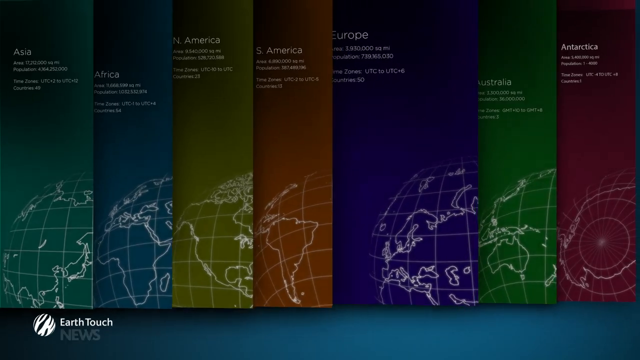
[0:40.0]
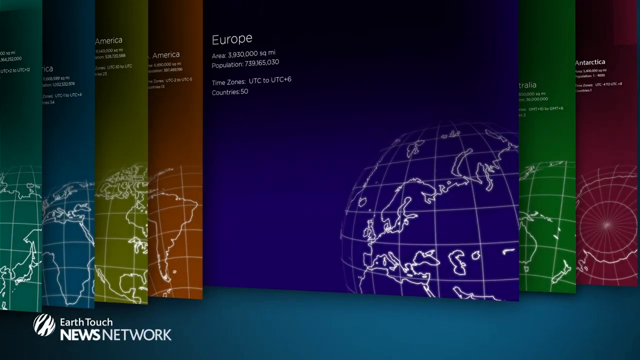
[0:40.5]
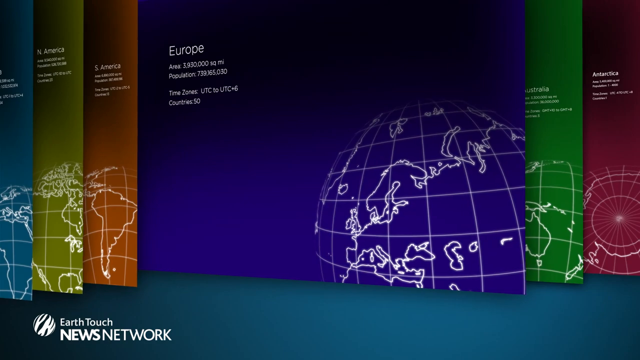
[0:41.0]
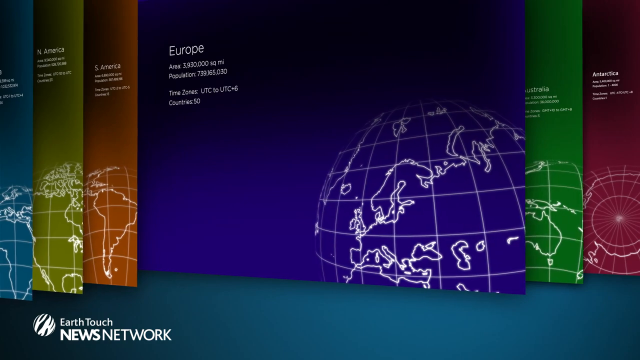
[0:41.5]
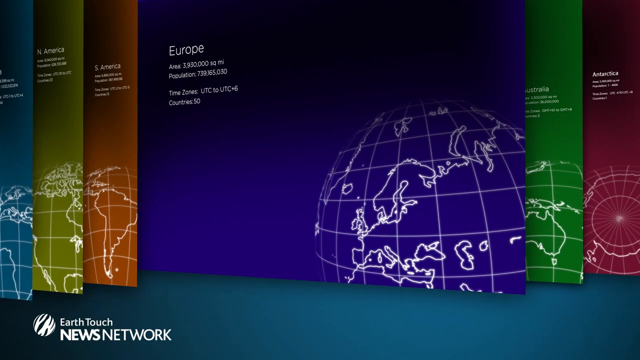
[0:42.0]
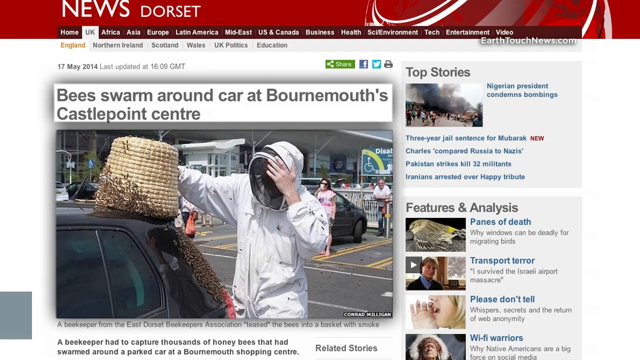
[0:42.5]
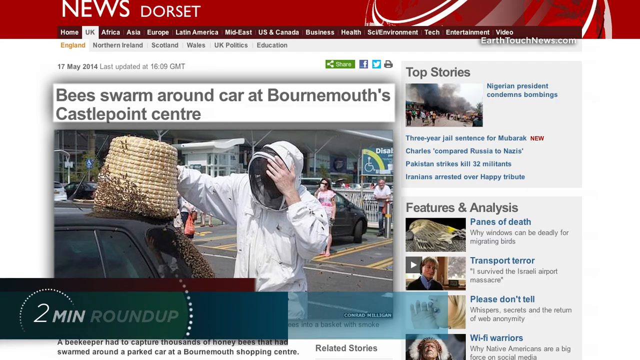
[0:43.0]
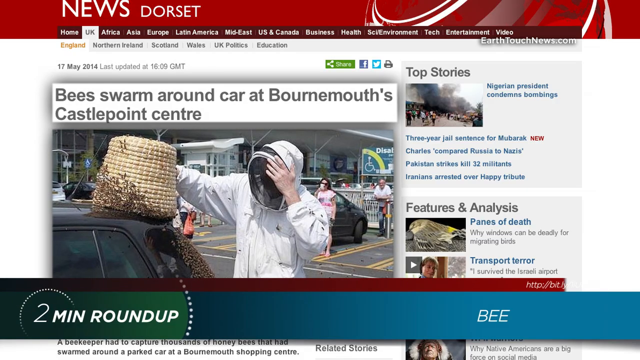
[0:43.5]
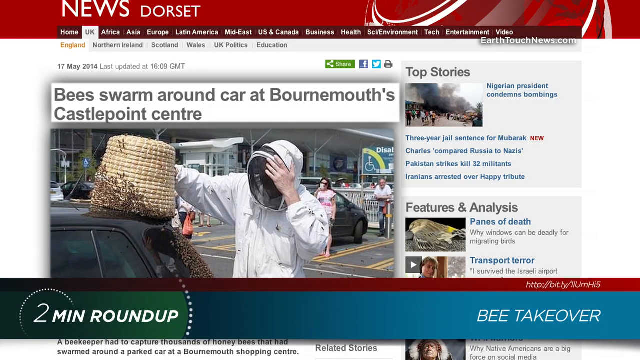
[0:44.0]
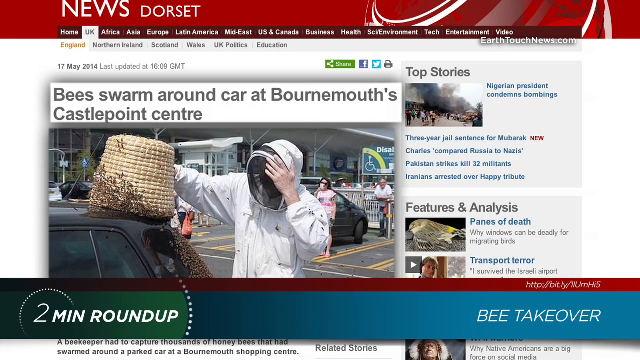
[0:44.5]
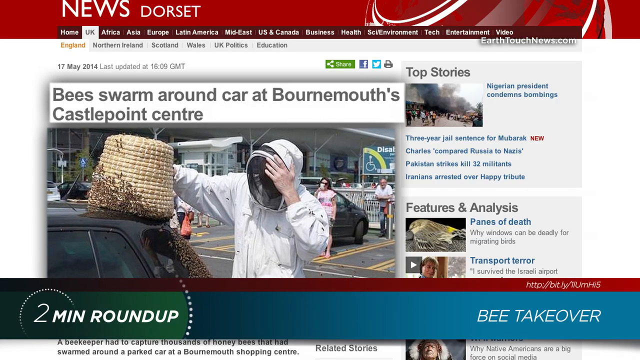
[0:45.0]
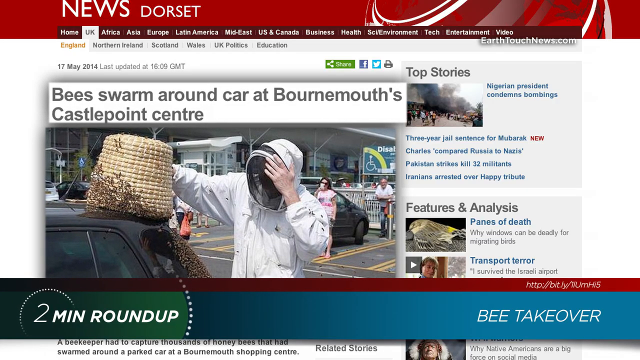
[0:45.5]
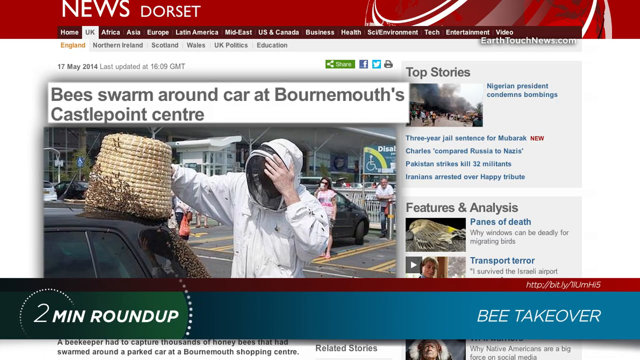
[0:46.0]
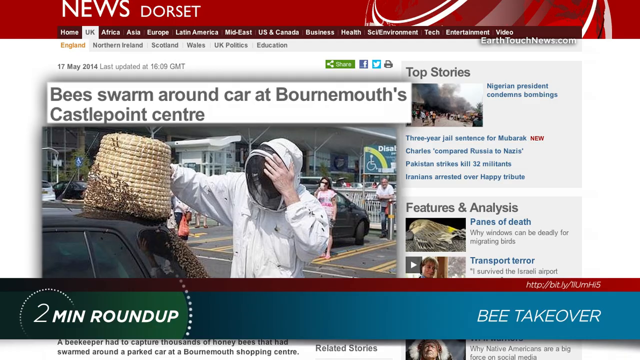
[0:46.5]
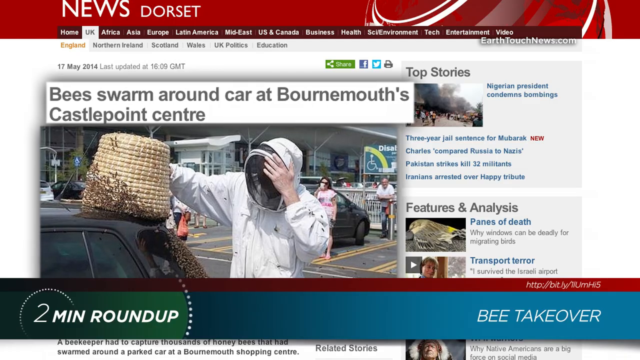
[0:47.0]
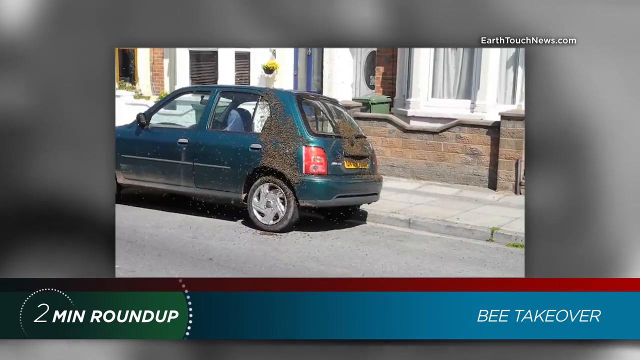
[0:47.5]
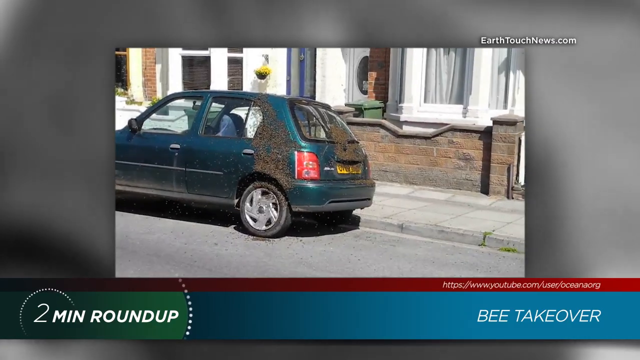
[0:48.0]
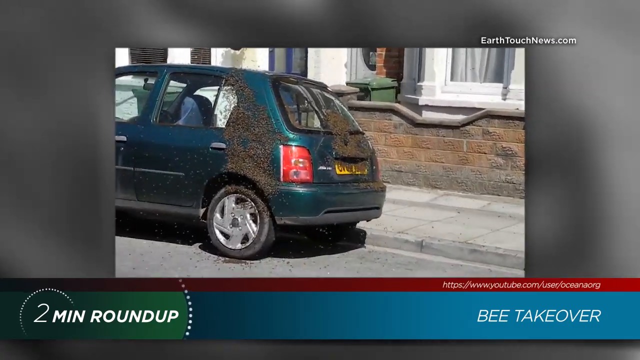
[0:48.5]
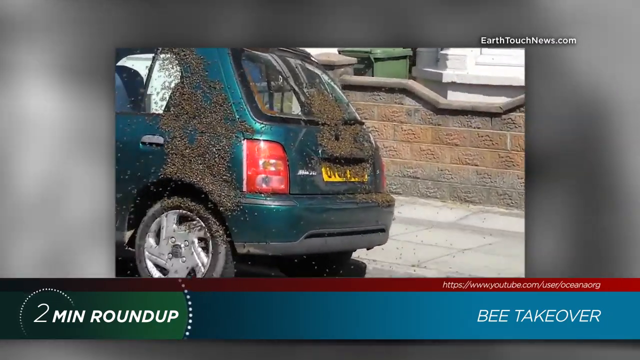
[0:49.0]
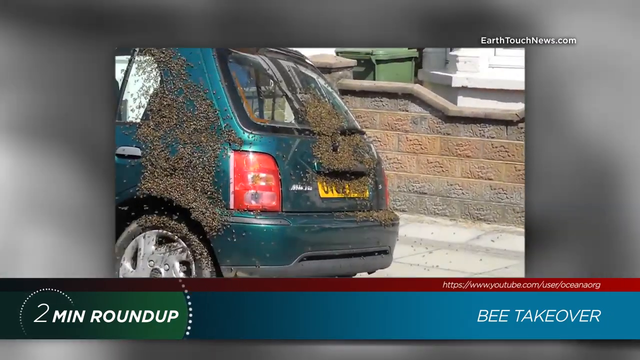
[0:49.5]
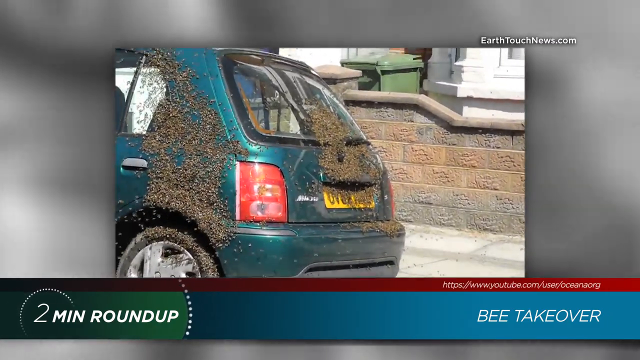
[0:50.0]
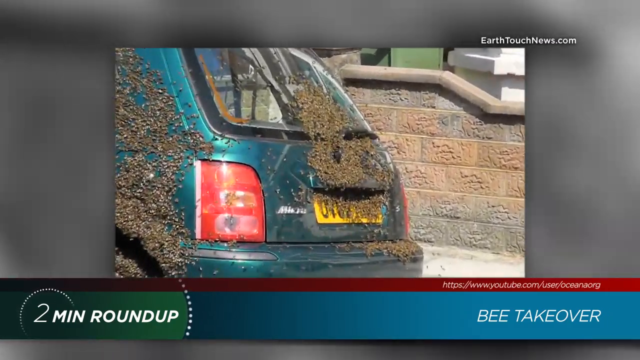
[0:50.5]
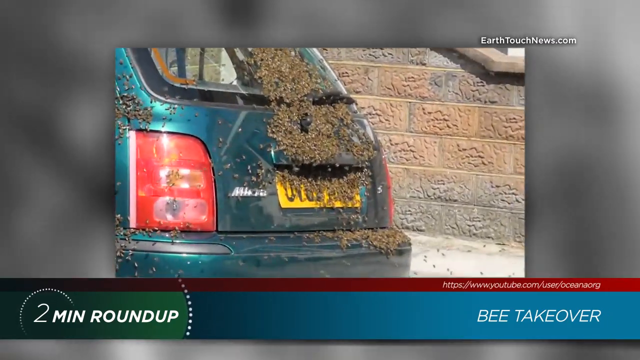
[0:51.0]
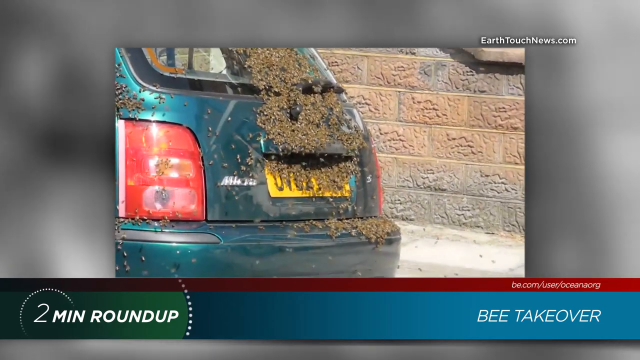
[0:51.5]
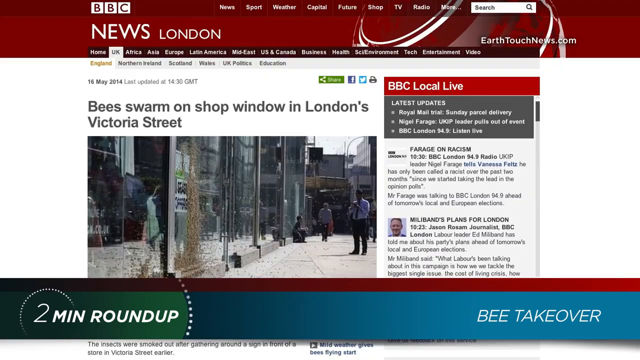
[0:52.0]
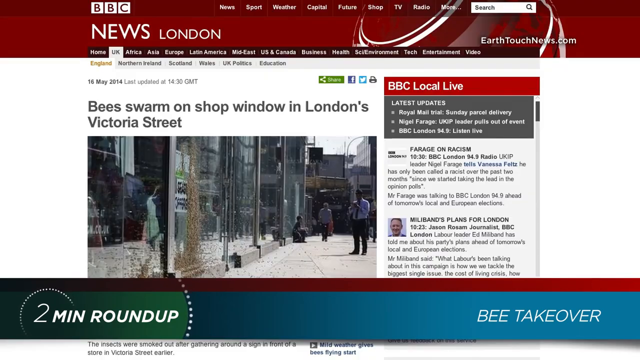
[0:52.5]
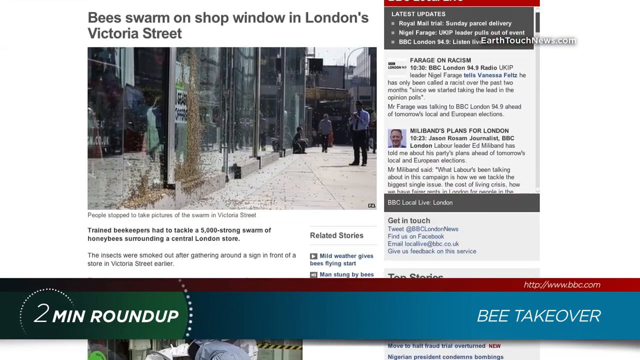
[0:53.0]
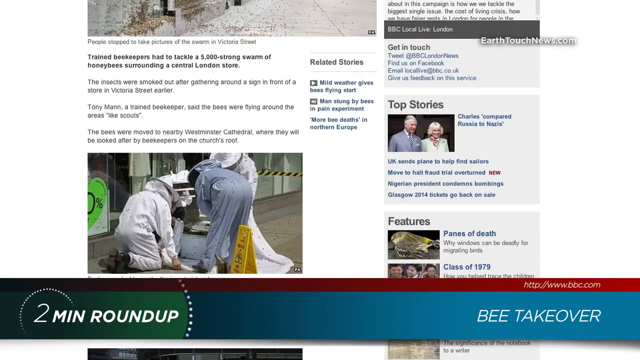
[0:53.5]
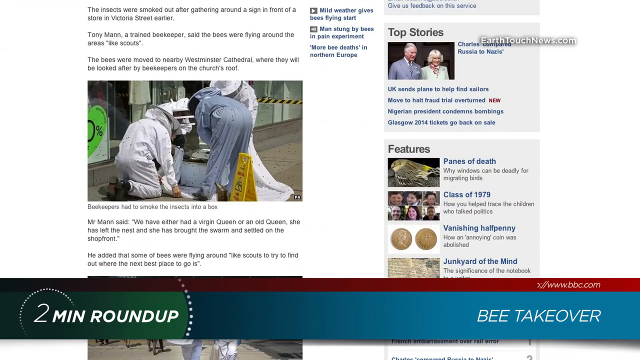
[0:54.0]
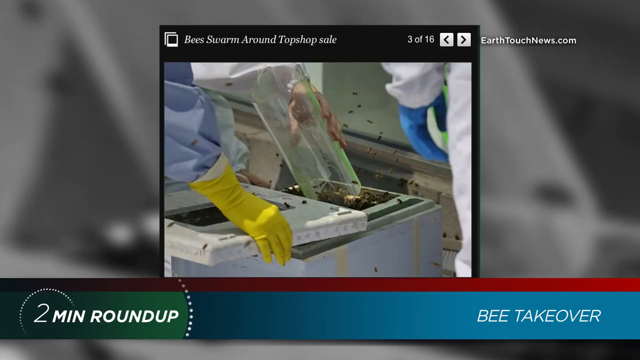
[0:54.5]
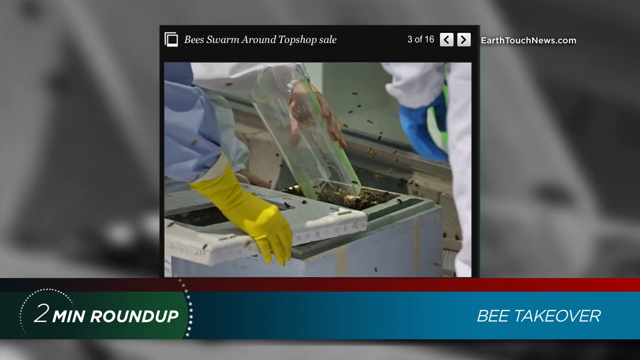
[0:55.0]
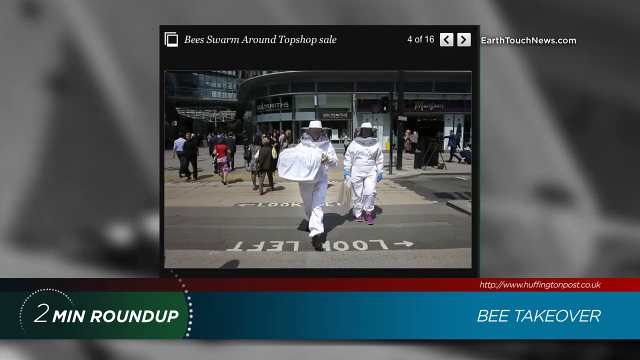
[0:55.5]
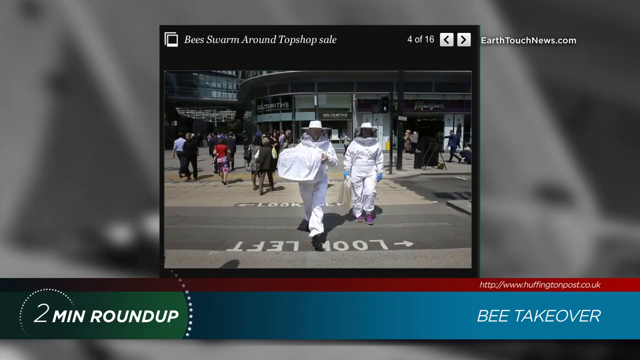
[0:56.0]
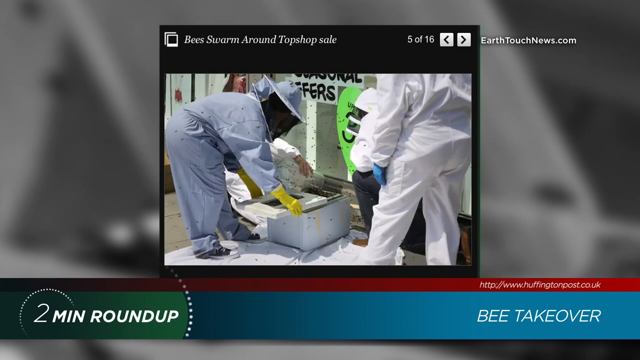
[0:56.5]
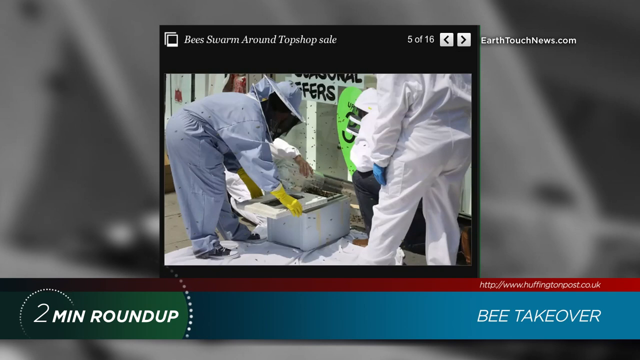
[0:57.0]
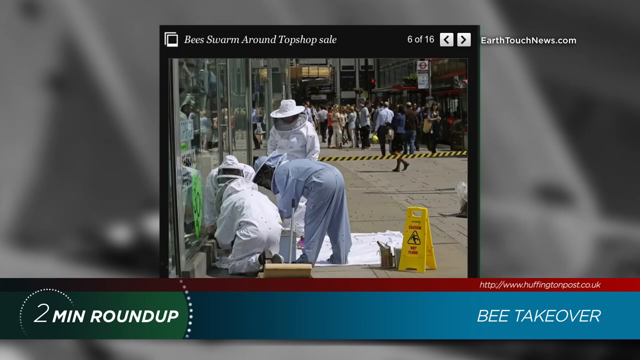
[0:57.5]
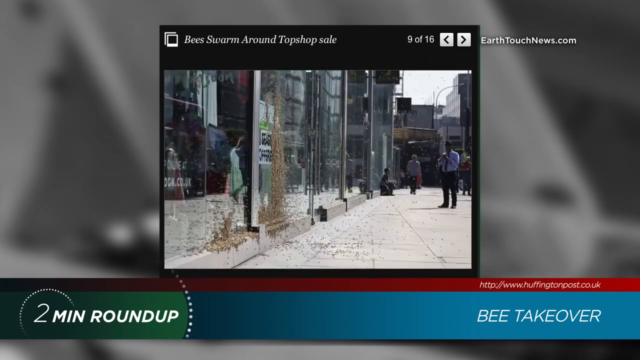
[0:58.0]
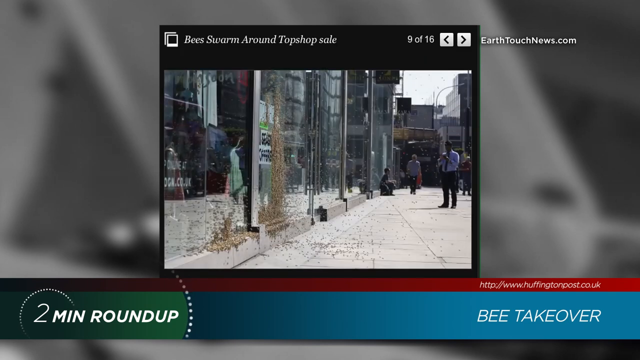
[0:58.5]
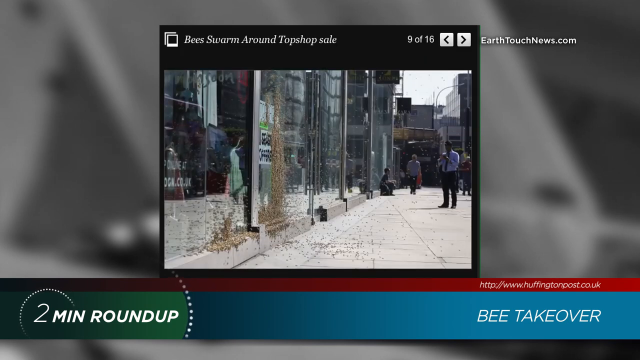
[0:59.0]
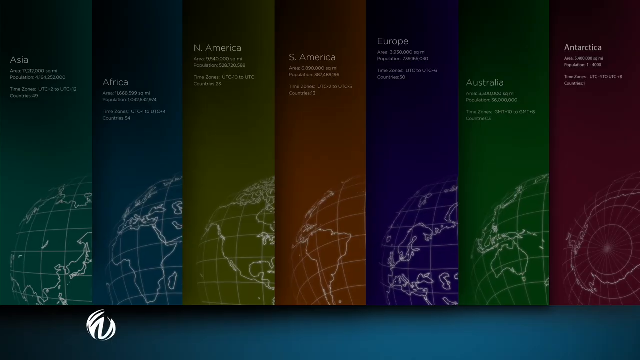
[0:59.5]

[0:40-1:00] All the continents are shown, each represented by a different colour. The view zooms in on Europe, whose colour is purple, and then moves to a news article by News Dorset with the headline "Bees swarm around car at Bournemouth's Castle Point Center." In the picture there appears to be a beekeeper in an all-white beekeeping uniform holding some sort of honeycomb or cone, trying to collect the bees off a car. A video clip then shows the bees swarming the car: they are on the trunk near the handle, and also on the left side of the car and the left back wheel. Another article is pulled up, reading "bees swarm on shop window in London's Victoria Street," followed by a bunch of bees on the street and beekeepers trying to collect the bees into different bins to get them safe.